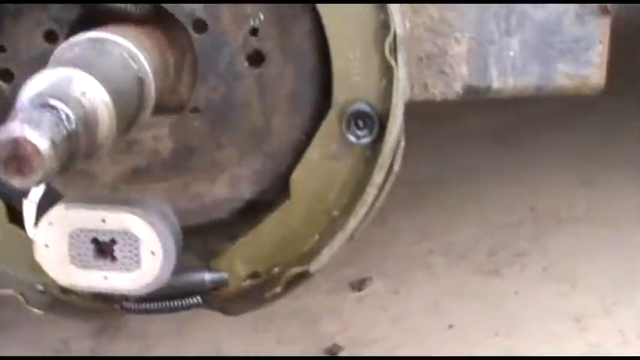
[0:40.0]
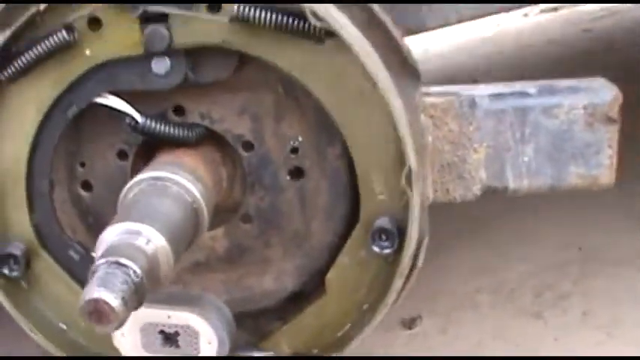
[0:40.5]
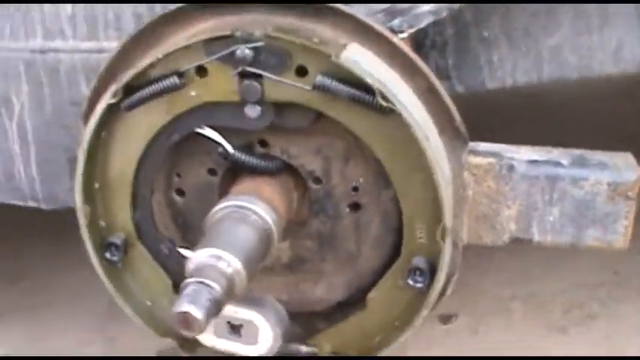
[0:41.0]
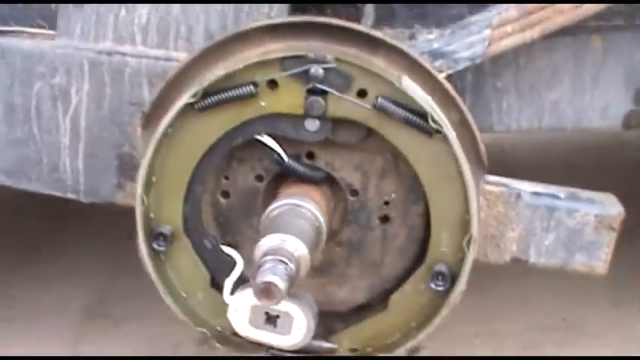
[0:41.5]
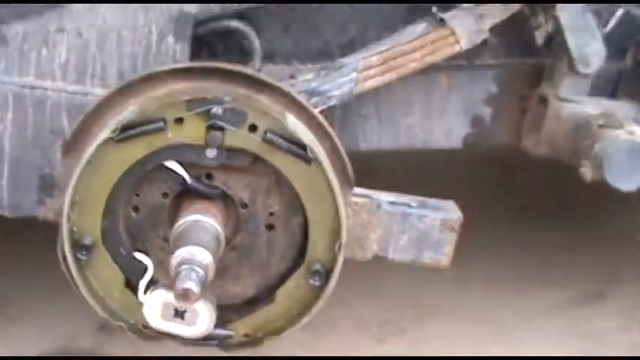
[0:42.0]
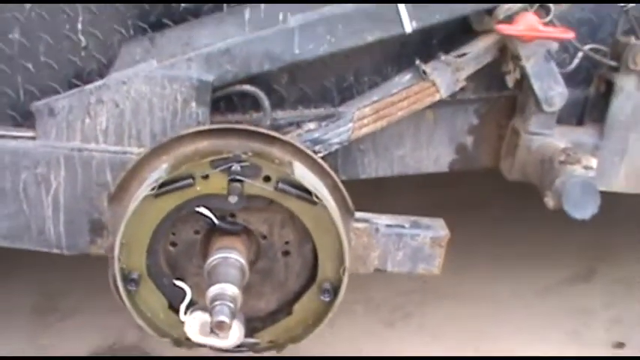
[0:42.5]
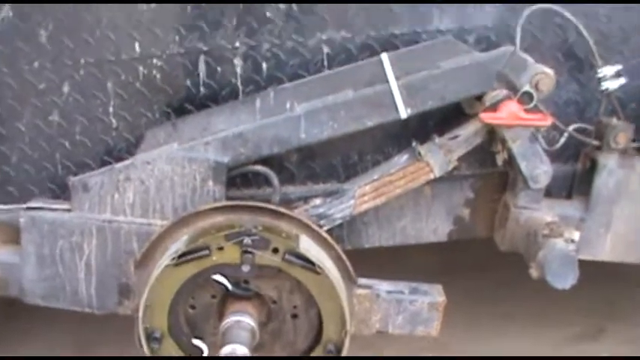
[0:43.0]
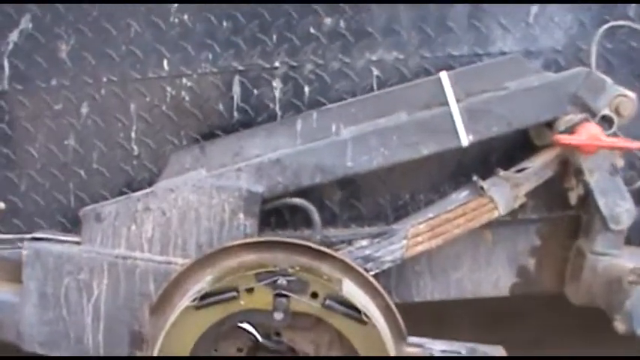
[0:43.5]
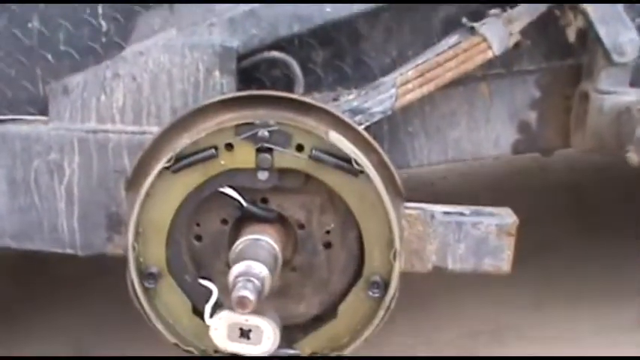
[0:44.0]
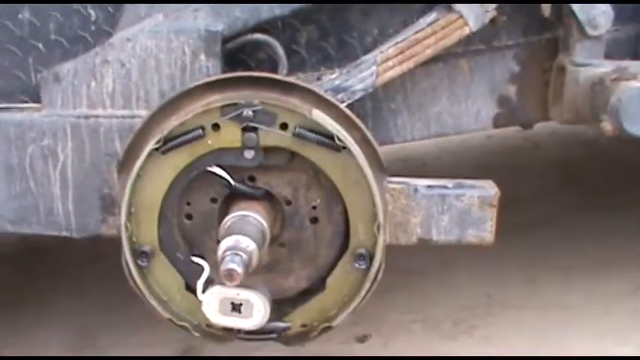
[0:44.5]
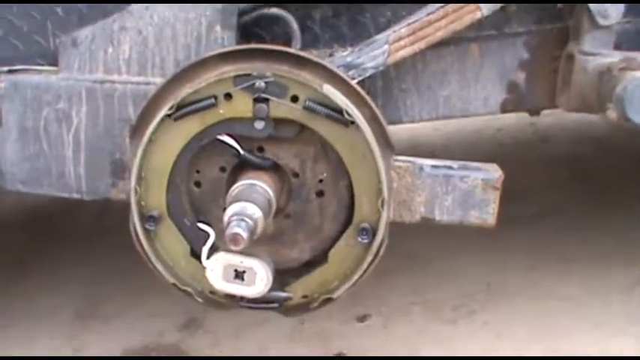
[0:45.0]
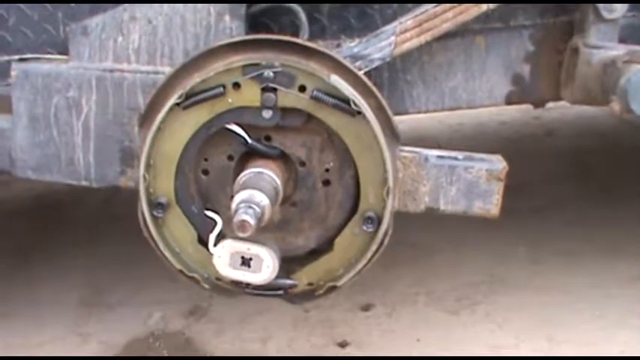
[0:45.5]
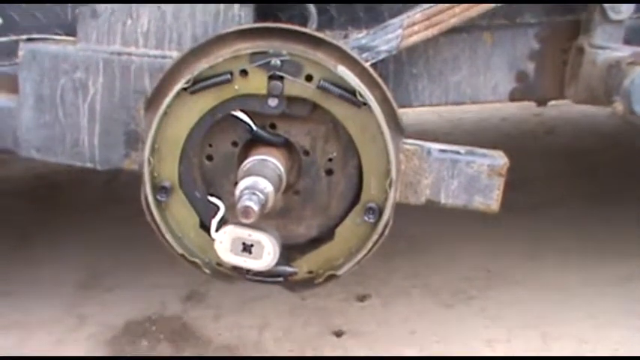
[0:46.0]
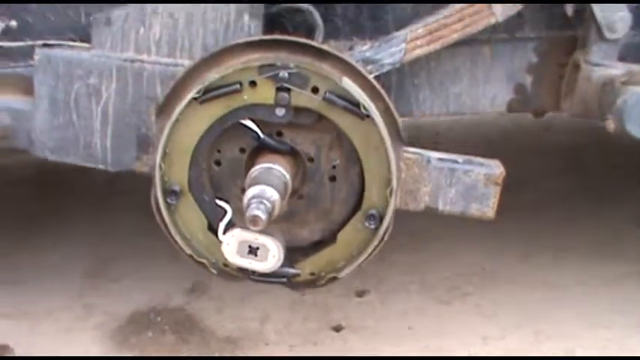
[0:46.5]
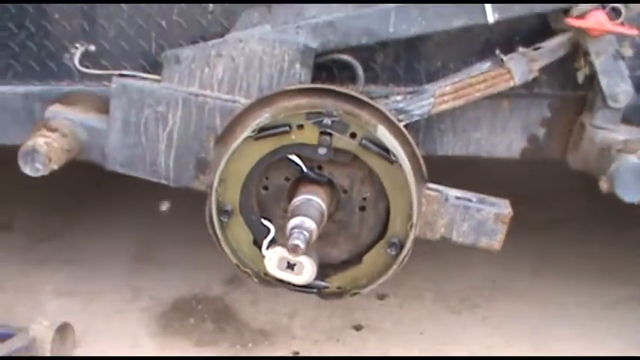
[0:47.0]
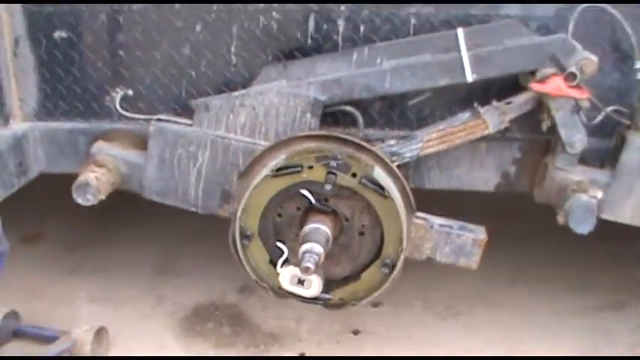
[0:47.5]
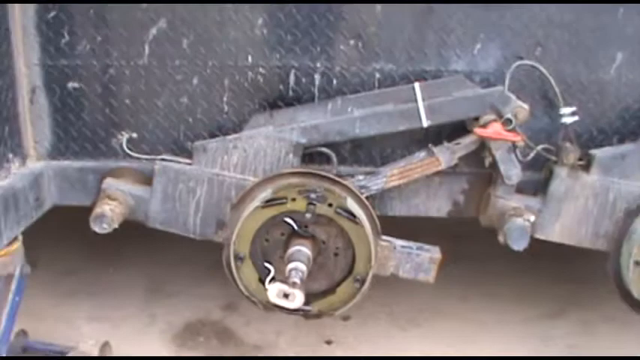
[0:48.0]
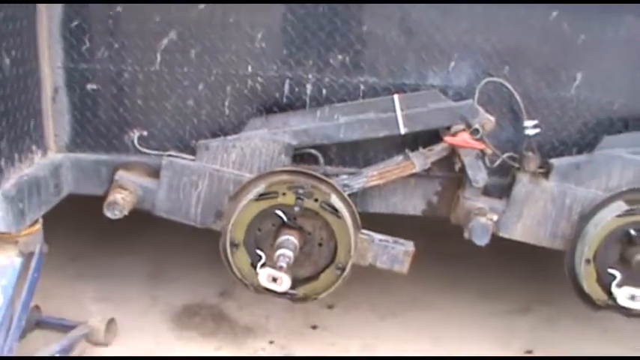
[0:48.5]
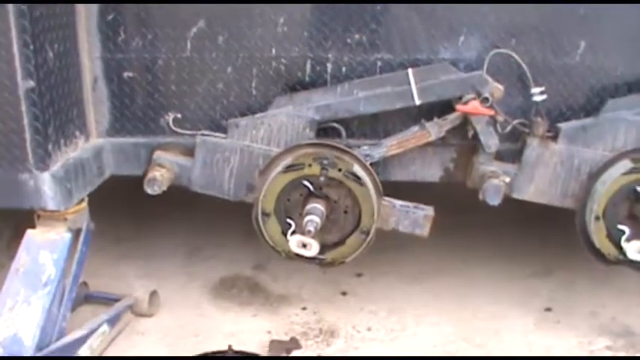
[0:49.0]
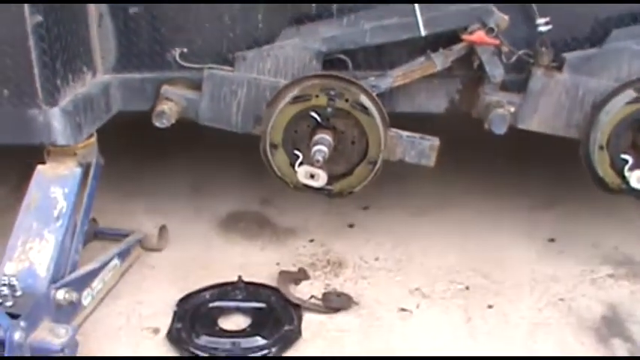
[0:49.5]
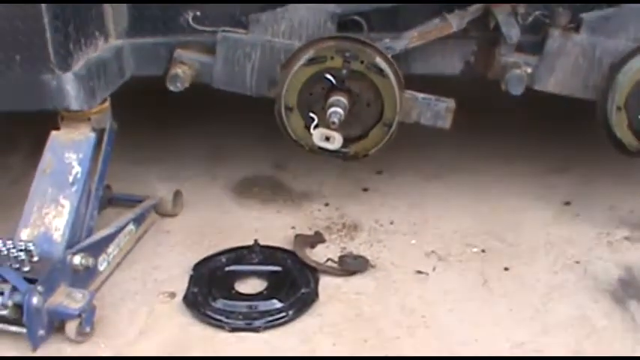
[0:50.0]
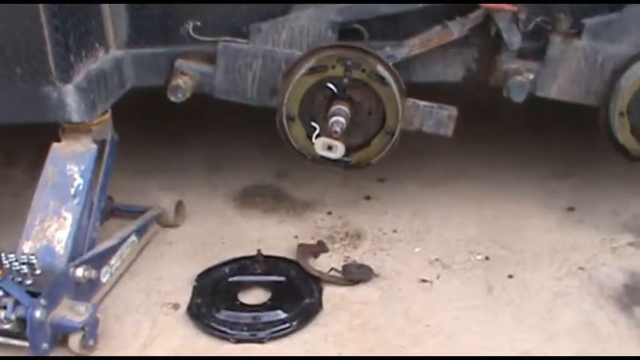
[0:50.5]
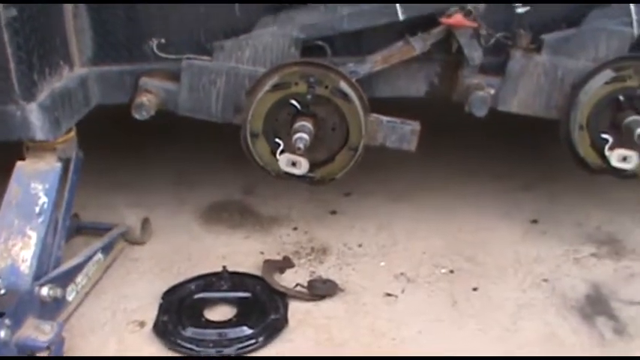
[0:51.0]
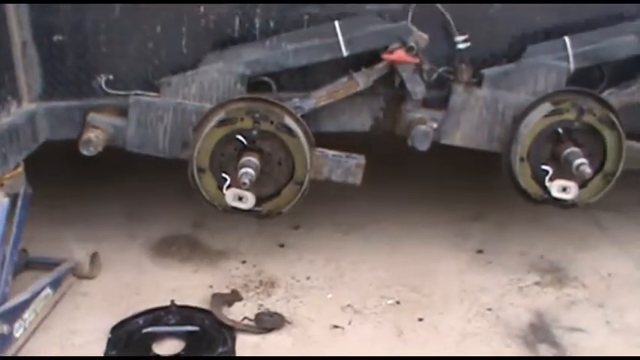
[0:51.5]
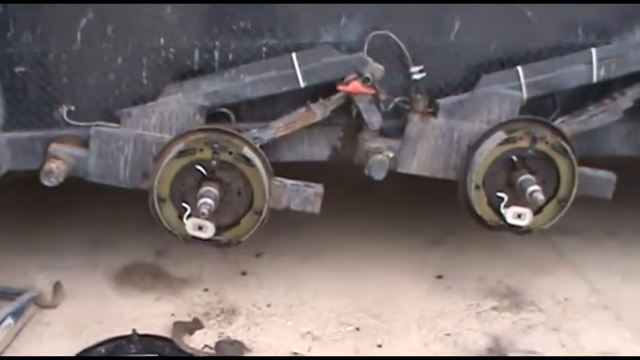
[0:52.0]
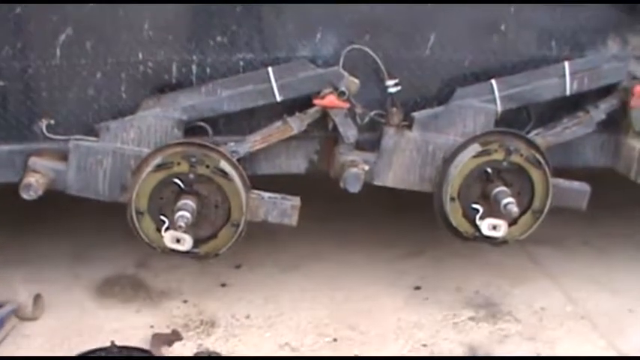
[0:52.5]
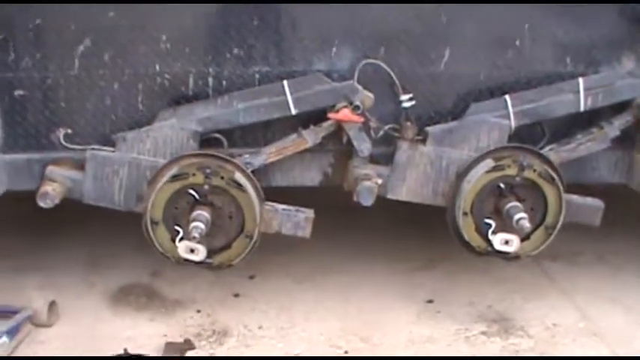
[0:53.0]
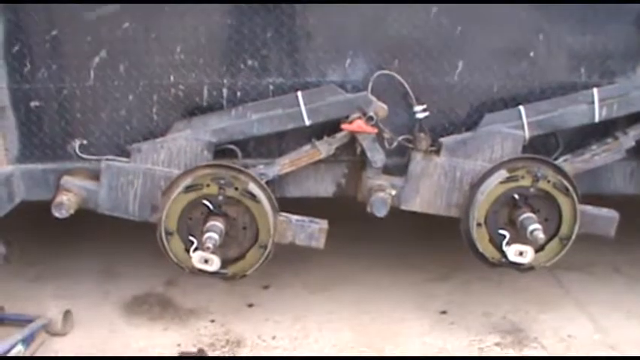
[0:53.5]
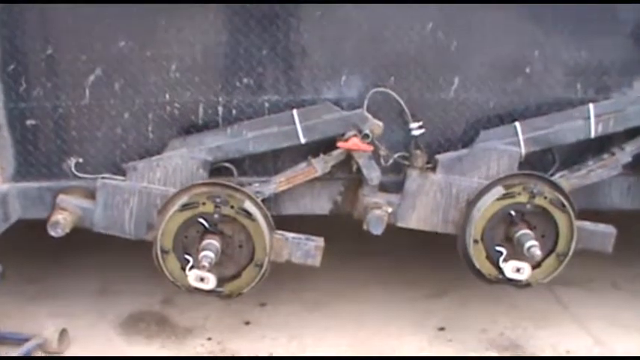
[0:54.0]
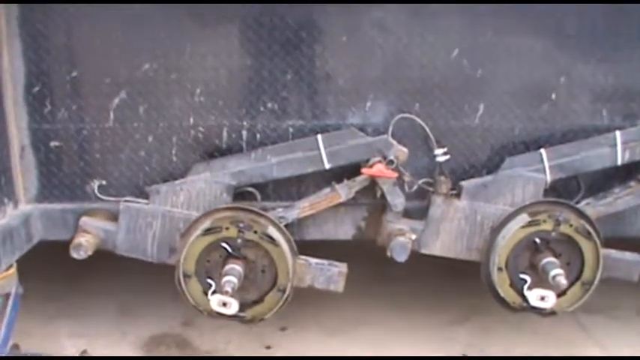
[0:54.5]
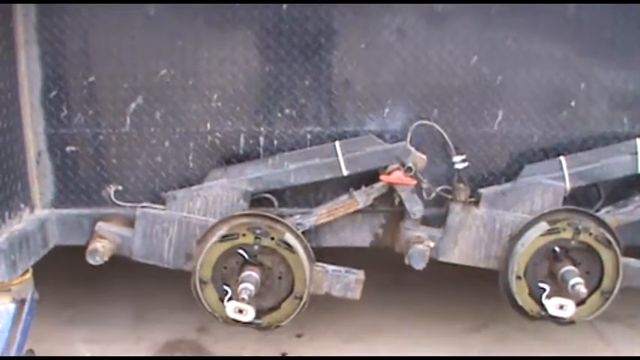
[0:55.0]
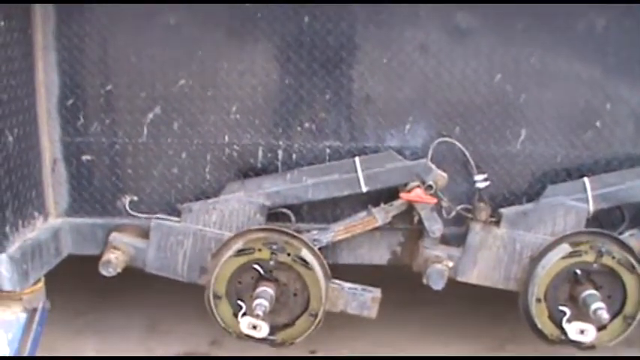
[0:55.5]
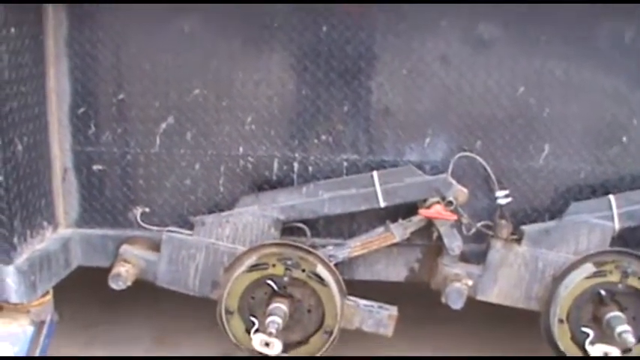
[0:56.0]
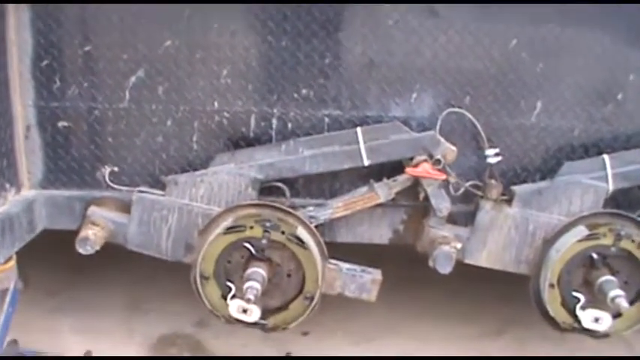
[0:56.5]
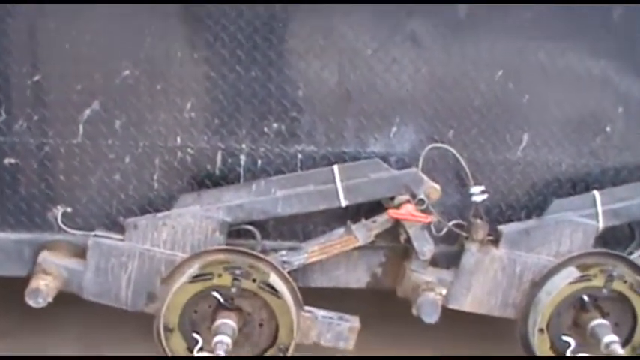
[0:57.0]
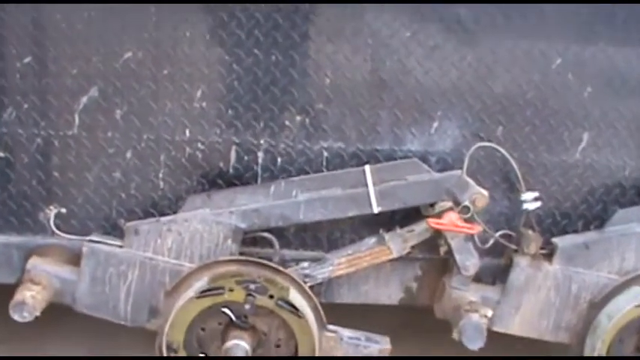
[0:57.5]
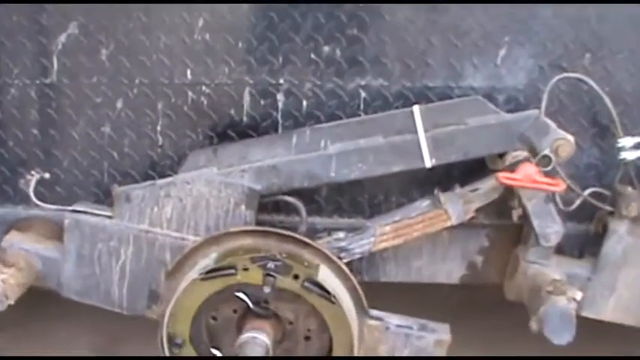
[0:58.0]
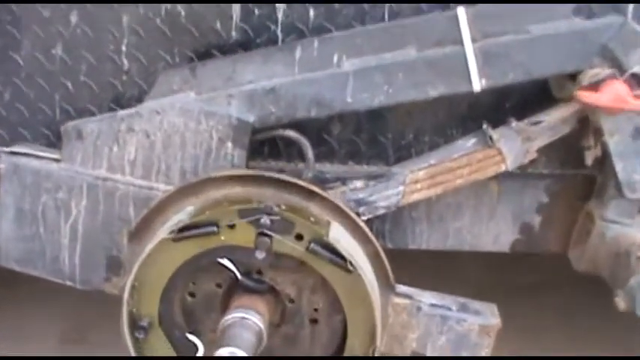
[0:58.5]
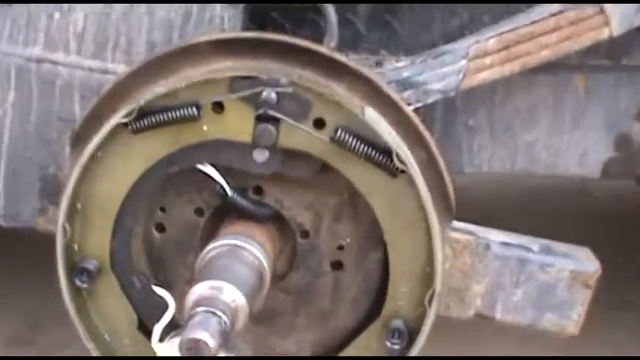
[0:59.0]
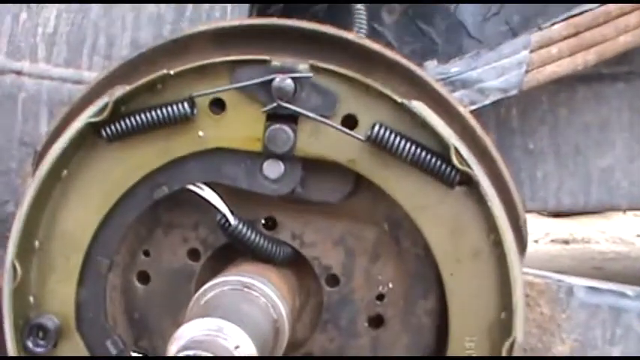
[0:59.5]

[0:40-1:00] The old part is taken away on the left side, and the camera moves out a little for a wider view, moves up a little, then back down, holding on the circular part where the tire is attached before moving out again. A little light snow comes across the screen. Backing up further reveals the blue jack underneath, holding it up; coming in from the left corner, about half of the jack is visible. Down to its right is the little black plate that goes over this before the tire is put back on, and up to the right is the worn metal piece, kind of leaning on it, which was the old piece. Zoomed out far enough, both sides are visible; they look exactly the same, both changed to new. The camera then walks back in closer and zooms toward the top where the springs are. One spring is on top of a bolt that sticks out, goes down about two inches, and coils to the upper left; another underneath it goes down to the right and coils to the upper right.